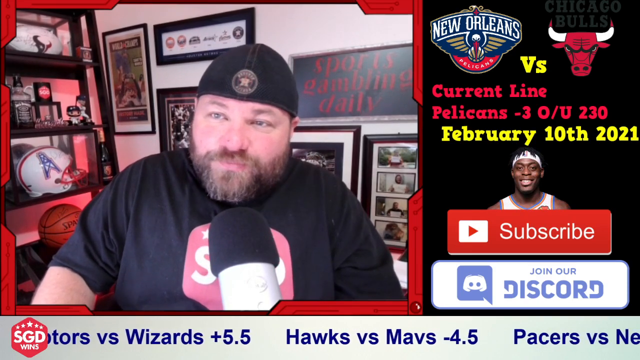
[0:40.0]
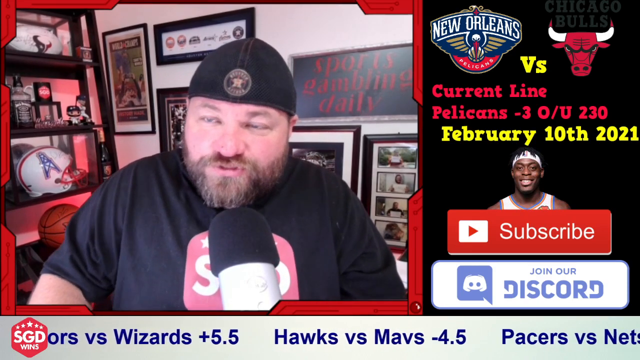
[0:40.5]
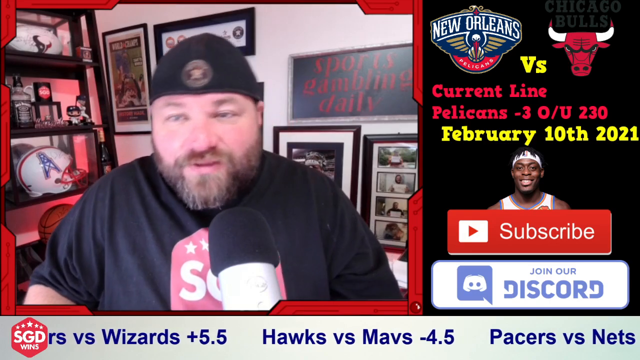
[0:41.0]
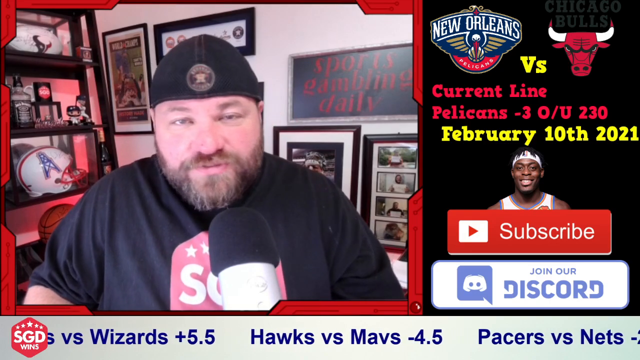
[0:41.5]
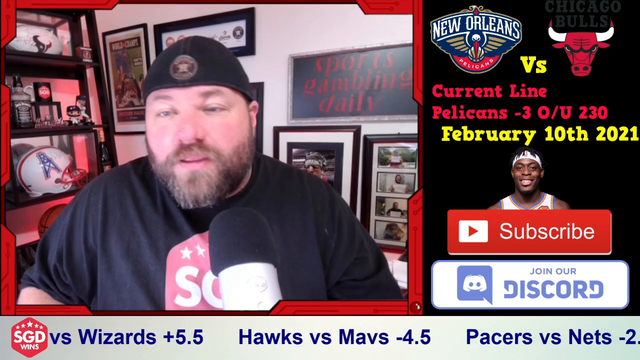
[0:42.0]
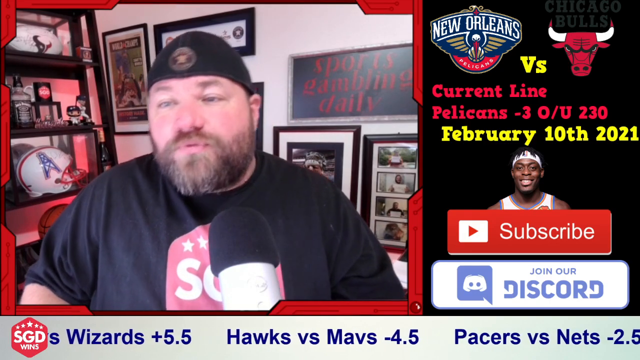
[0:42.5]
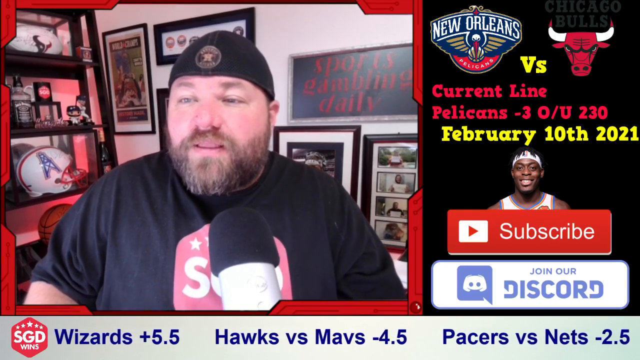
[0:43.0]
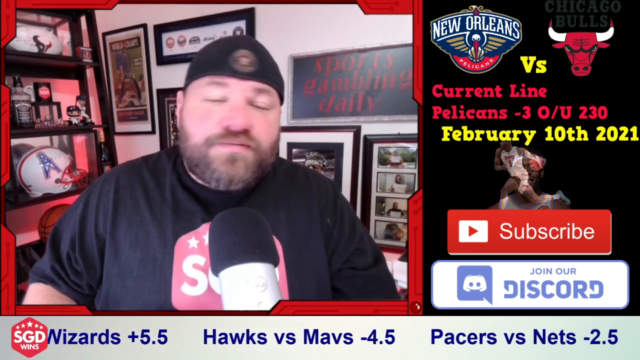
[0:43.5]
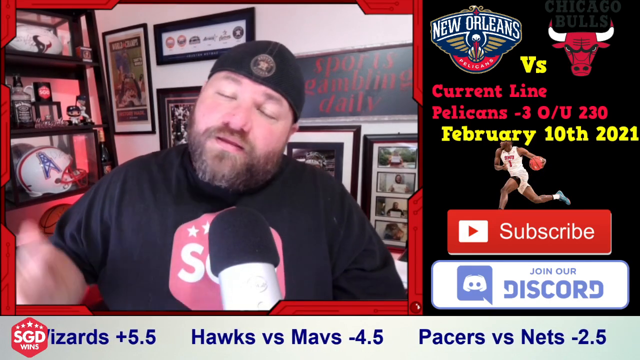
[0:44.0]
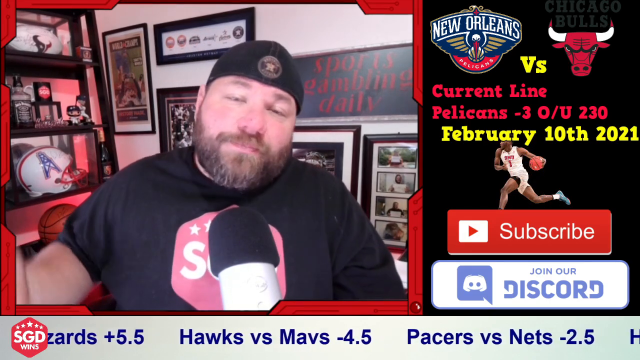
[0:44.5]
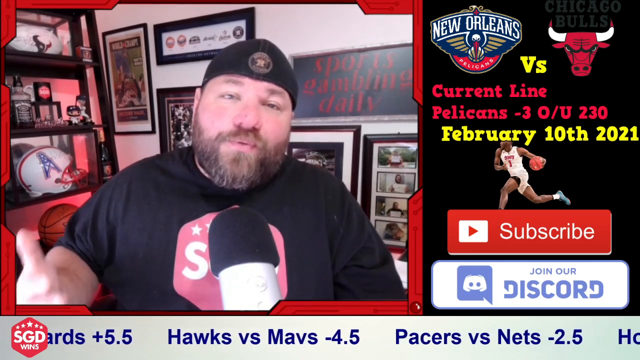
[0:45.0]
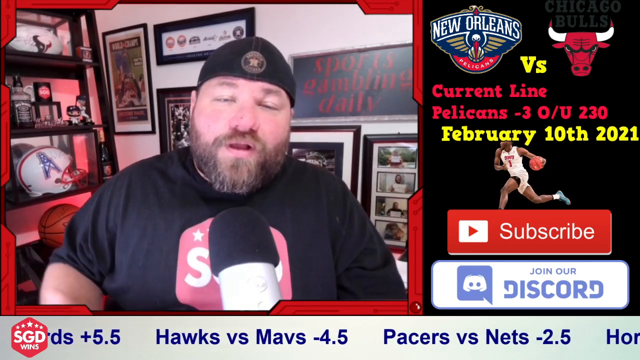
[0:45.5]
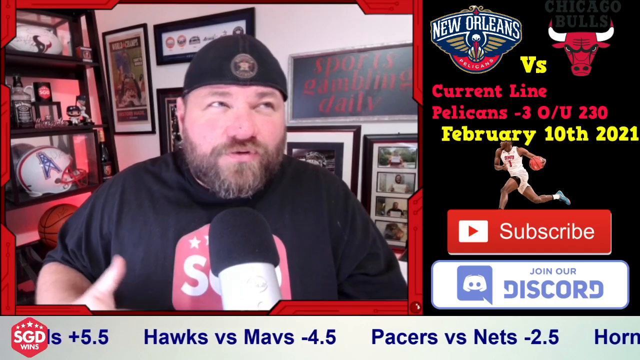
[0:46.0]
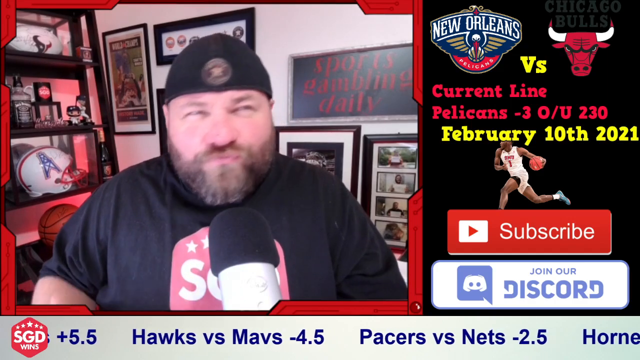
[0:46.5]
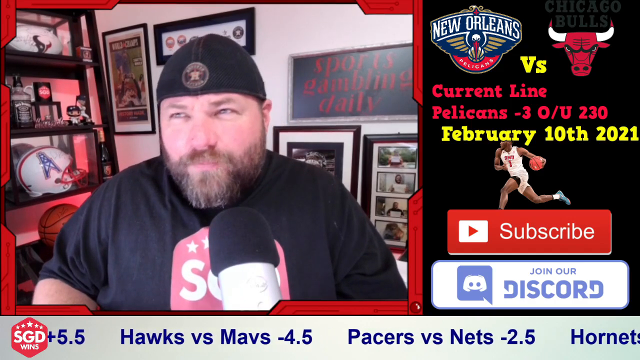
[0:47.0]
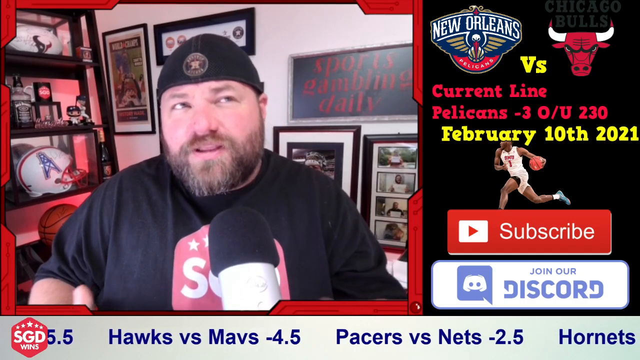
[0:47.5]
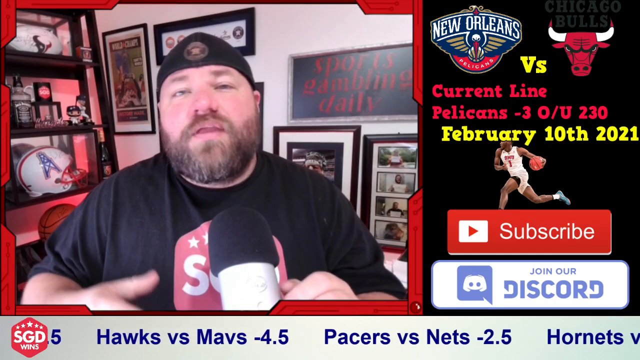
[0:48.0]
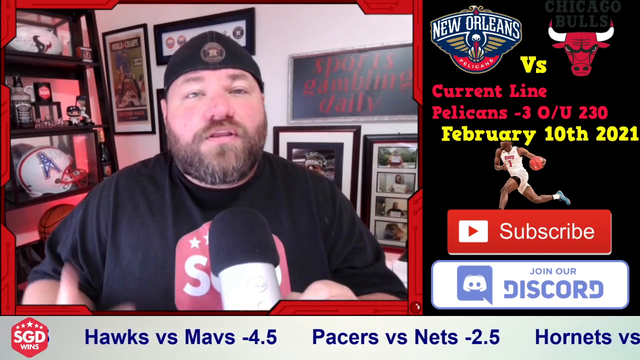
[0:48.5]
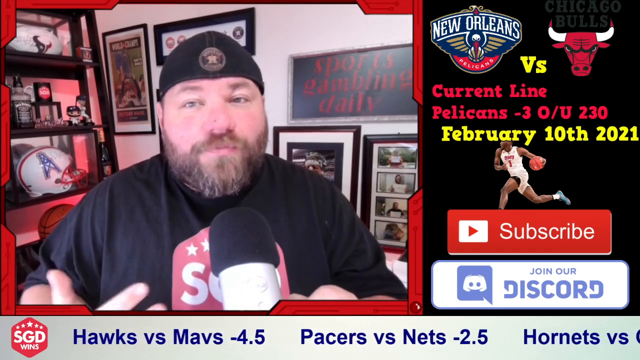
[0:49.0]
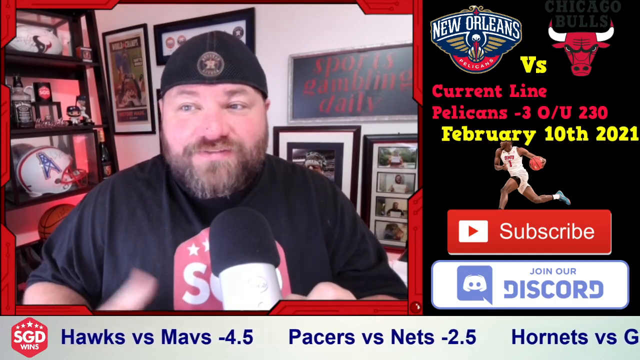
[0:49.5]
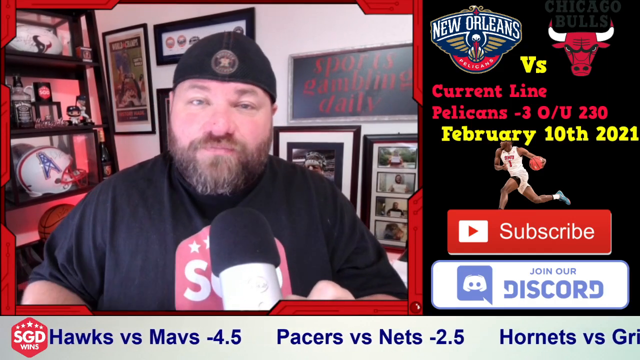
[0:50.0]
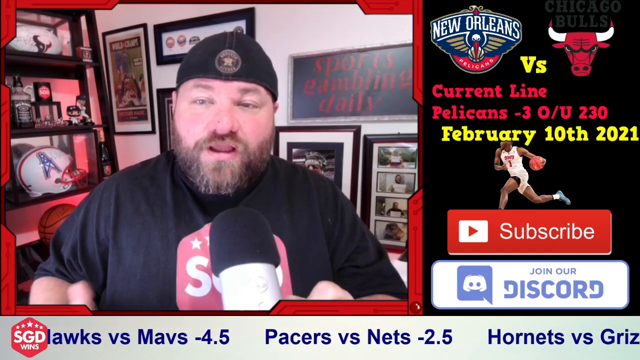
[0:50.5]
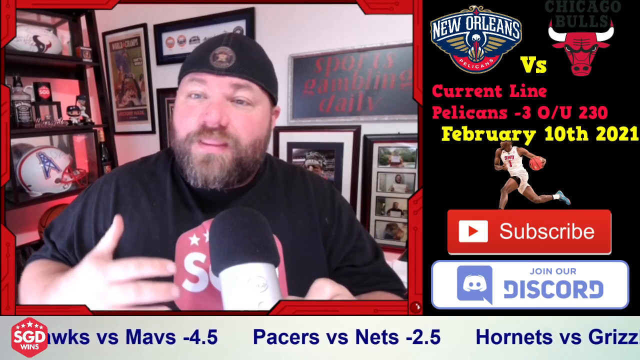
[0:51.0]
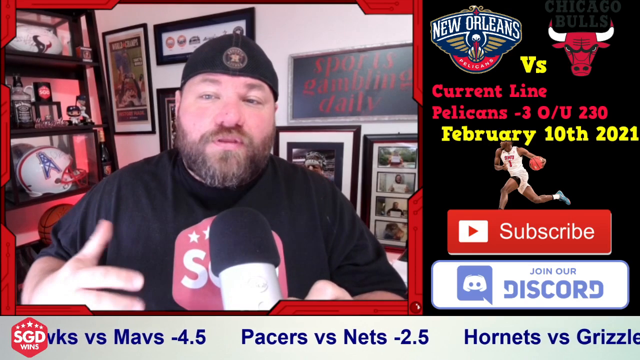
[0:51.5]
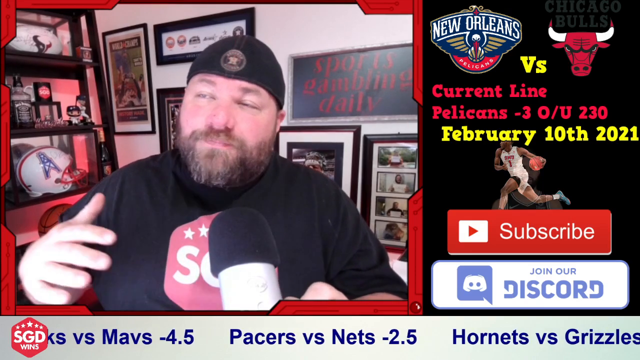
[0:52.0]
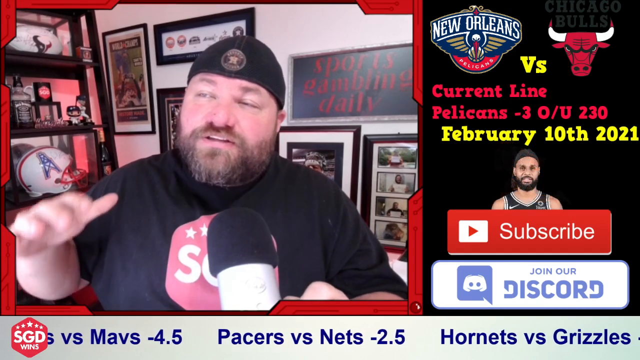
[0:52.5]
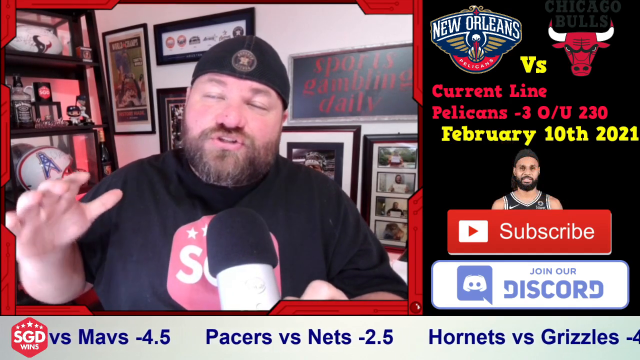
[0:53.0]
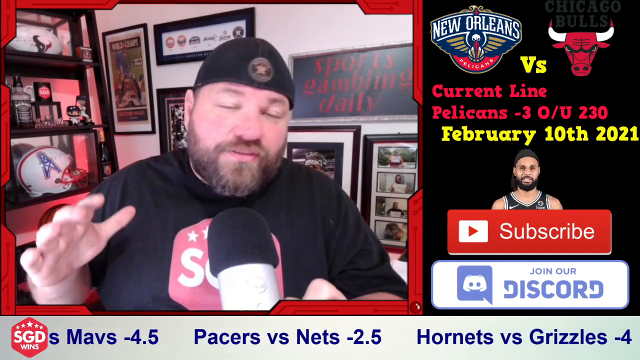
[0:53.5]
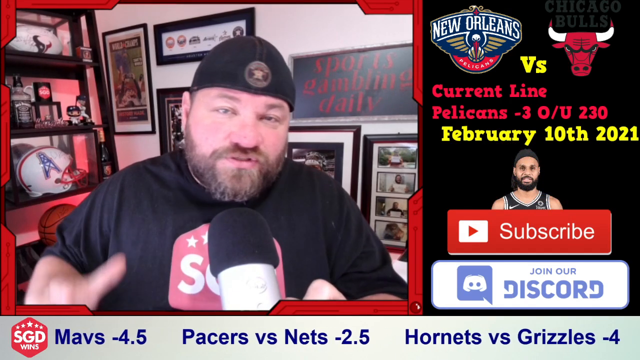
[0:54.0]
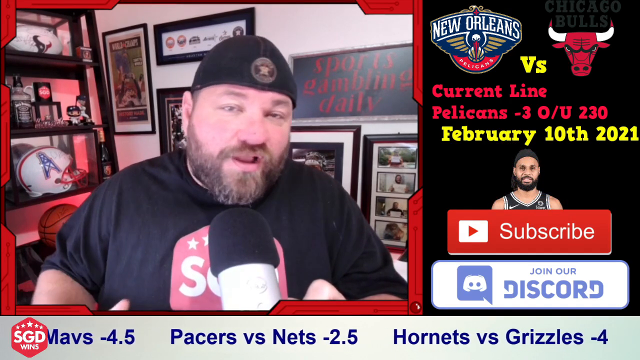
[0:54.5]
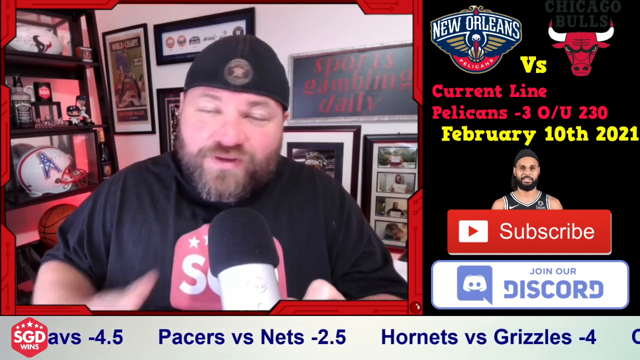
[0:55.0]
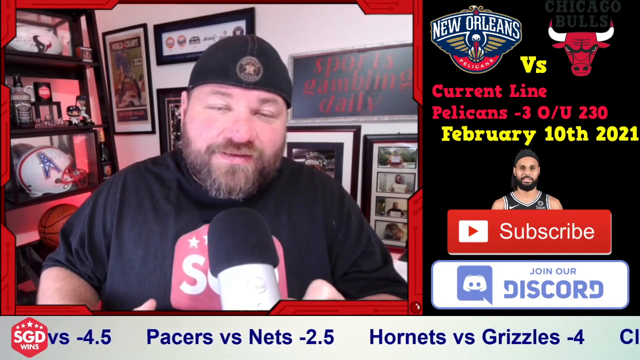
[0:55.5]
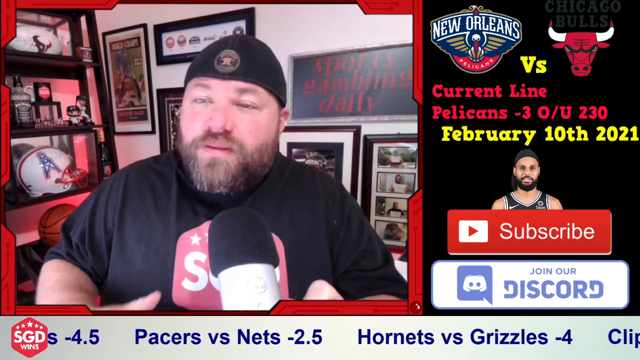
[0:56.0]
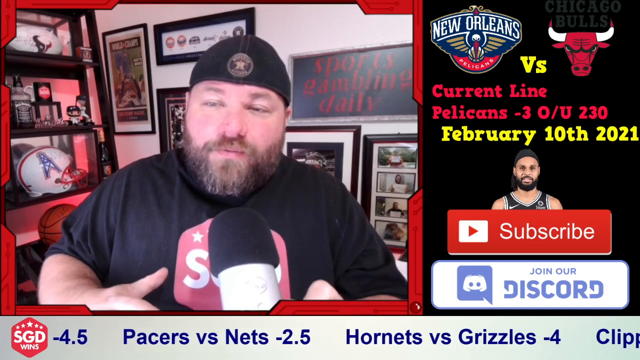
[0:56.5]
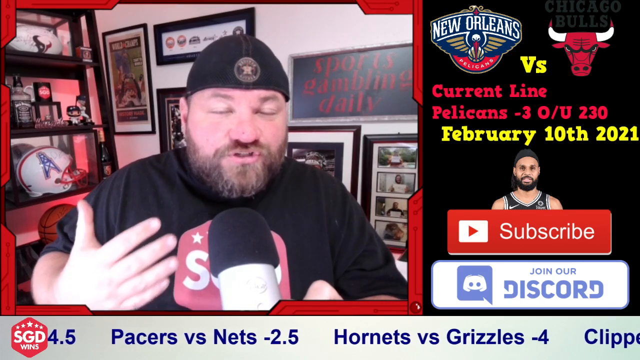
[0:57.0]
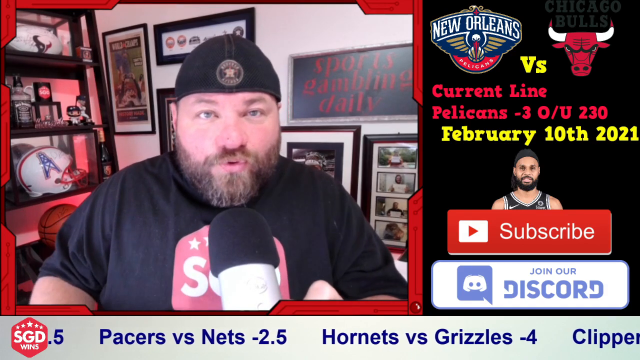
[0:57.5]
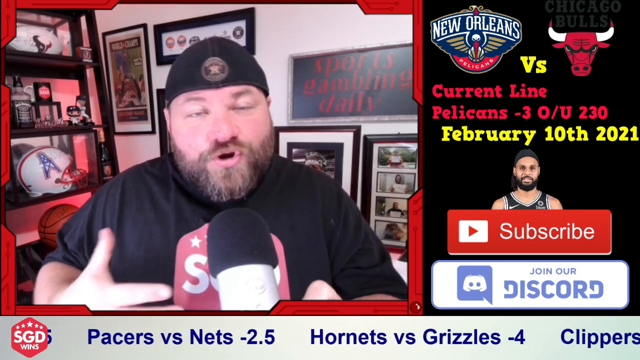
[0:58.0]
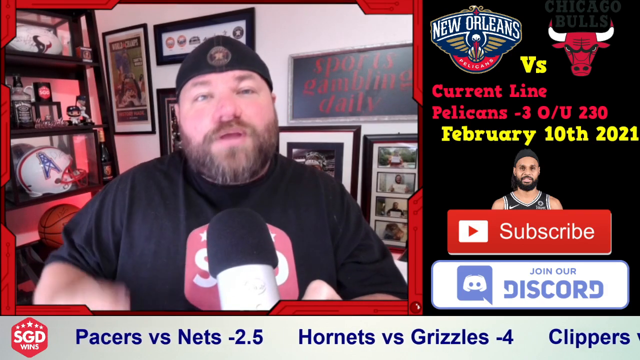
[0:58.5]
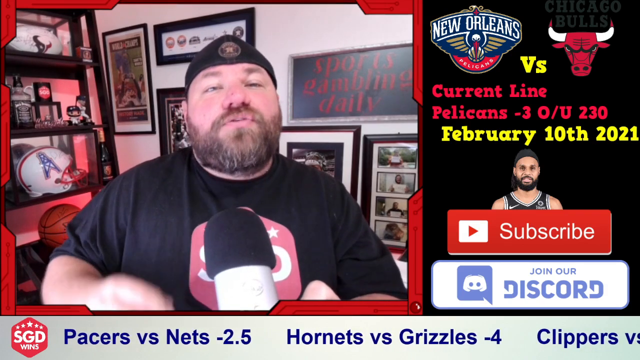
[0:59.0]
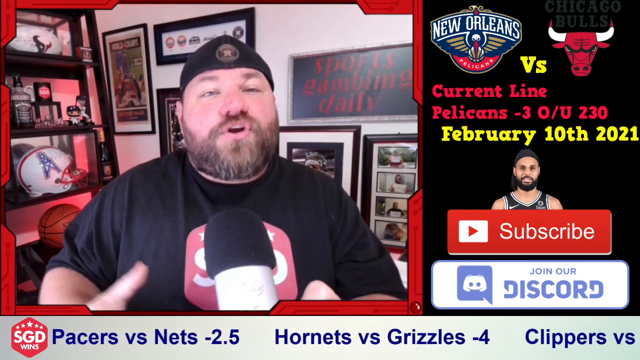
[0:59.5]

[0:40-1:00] The screen is split, with a Caucasian man on the left wearing a black T-shirt with red and white print on the front. He talks and moves his hand forward a little. Meanwhile, a picture of an NBA player in the middle of the right side of the split screen changes. First it shows an African American player in a white jersey with a white headband, then a player running down the court with the ball in his left hand, and later an African American player wearing a black headband and a black and gray jersey. The words above that section say it is the New Orleans Pelicans versus the Chicago Bulls, shown as a picture of a red bull with white horns. Below, text reads "current line Pelicans -3 O/U 230", and in yellow print "February 10th 2021".